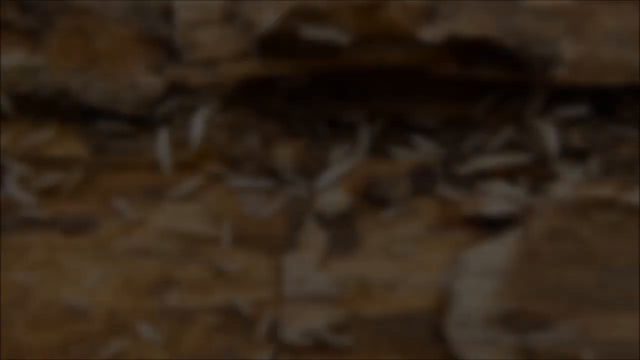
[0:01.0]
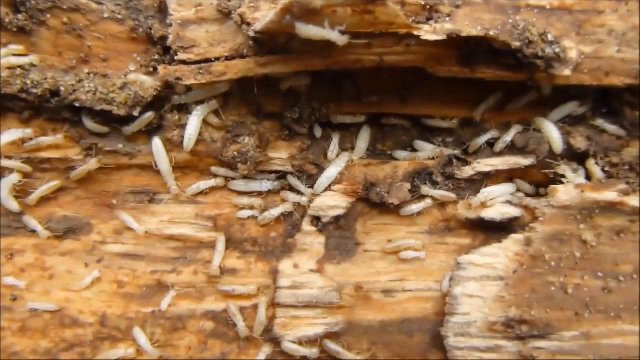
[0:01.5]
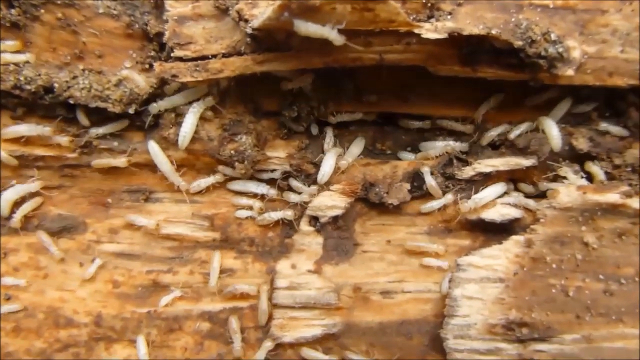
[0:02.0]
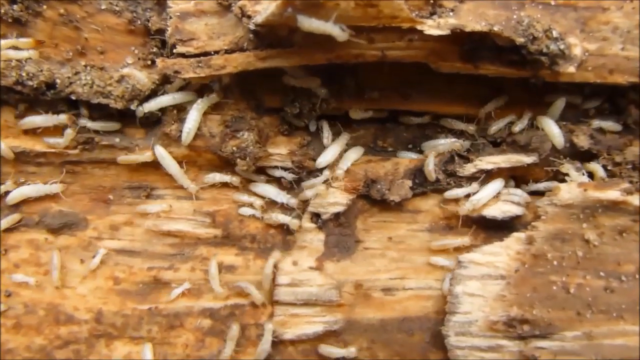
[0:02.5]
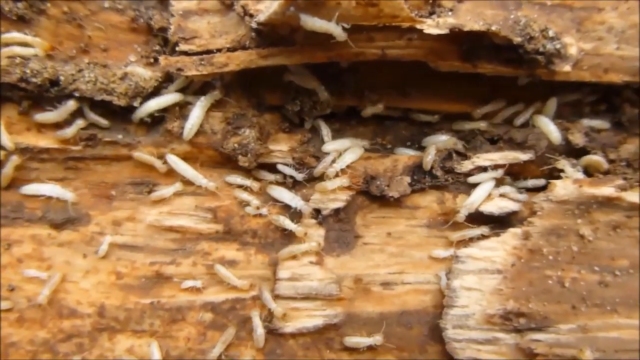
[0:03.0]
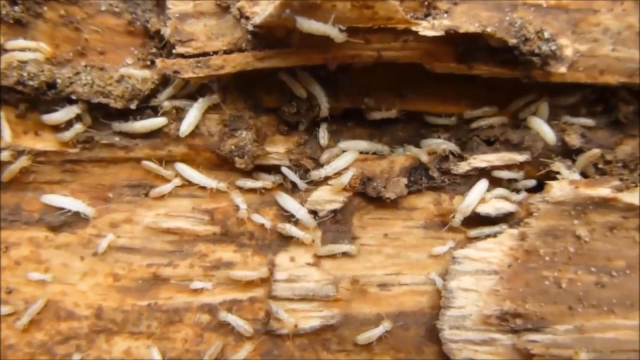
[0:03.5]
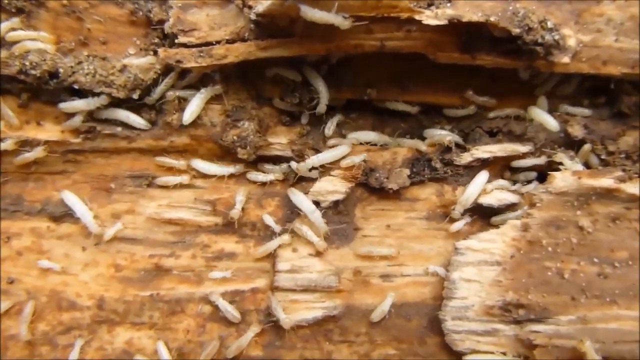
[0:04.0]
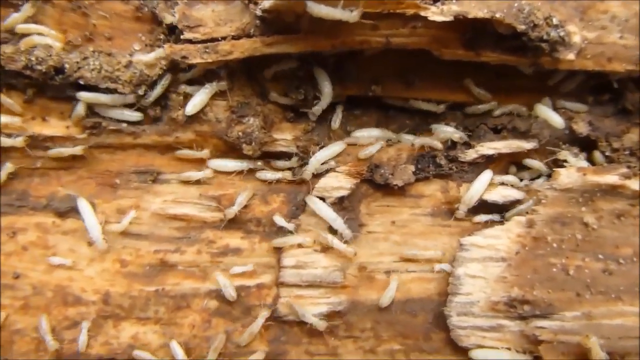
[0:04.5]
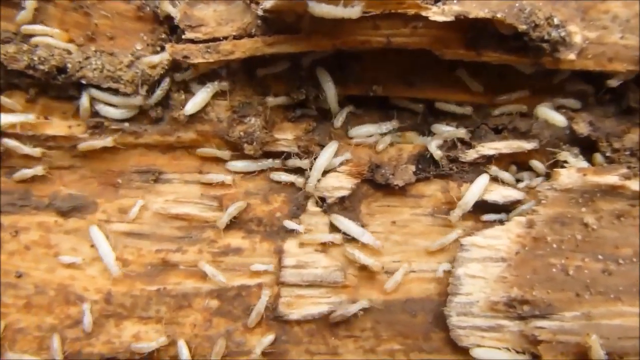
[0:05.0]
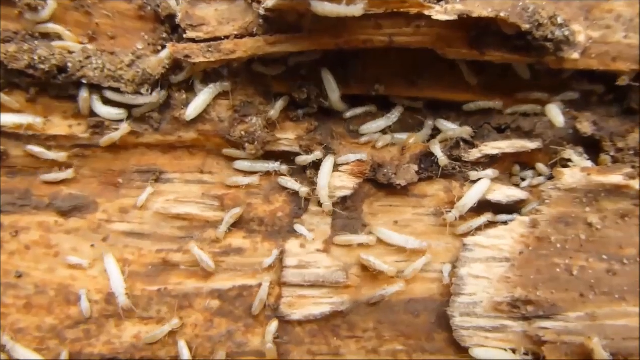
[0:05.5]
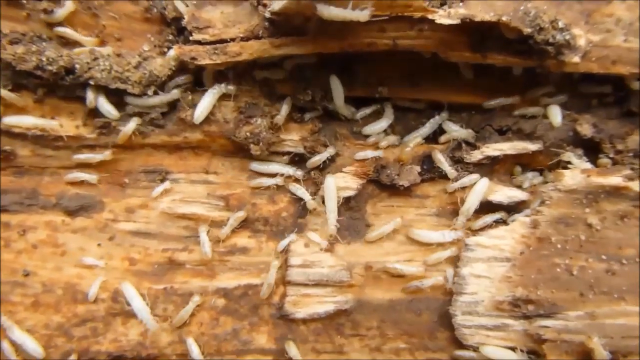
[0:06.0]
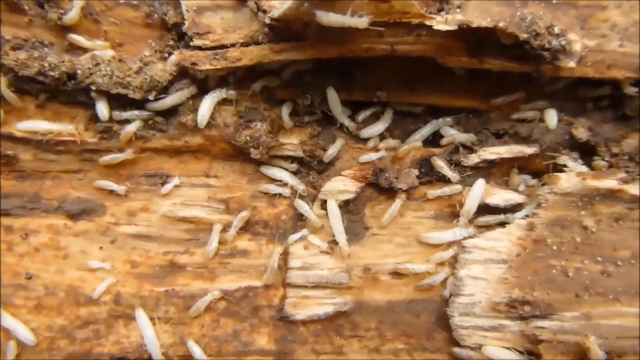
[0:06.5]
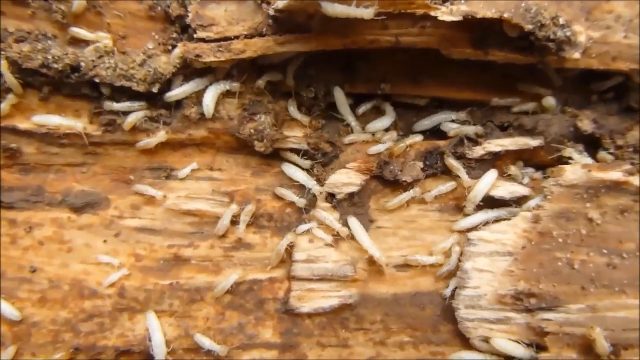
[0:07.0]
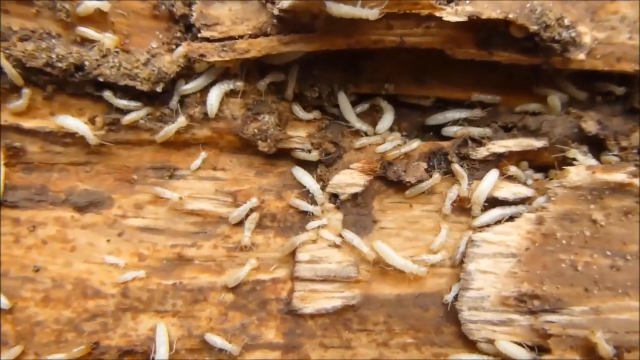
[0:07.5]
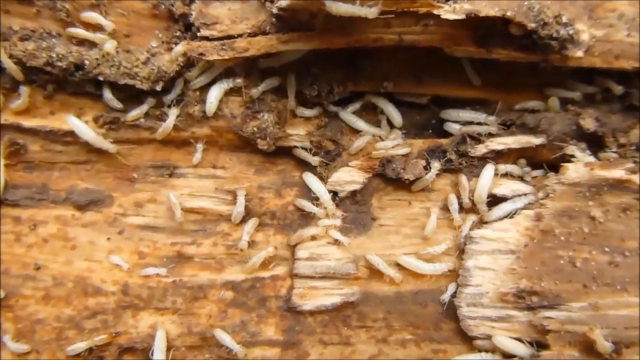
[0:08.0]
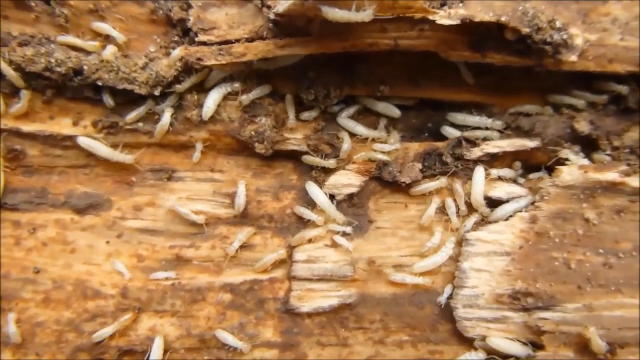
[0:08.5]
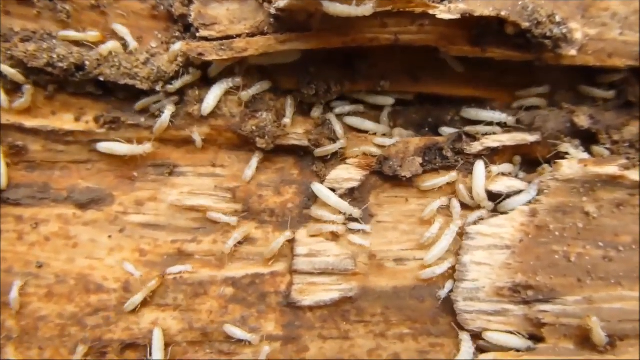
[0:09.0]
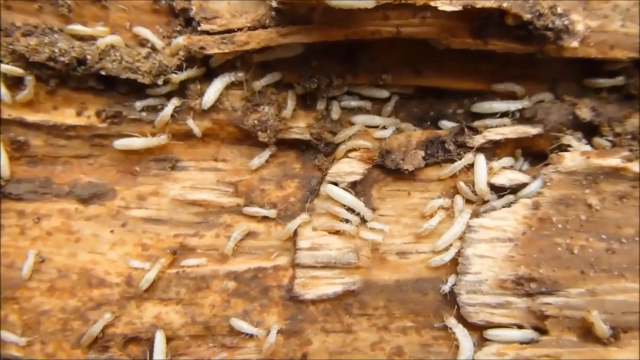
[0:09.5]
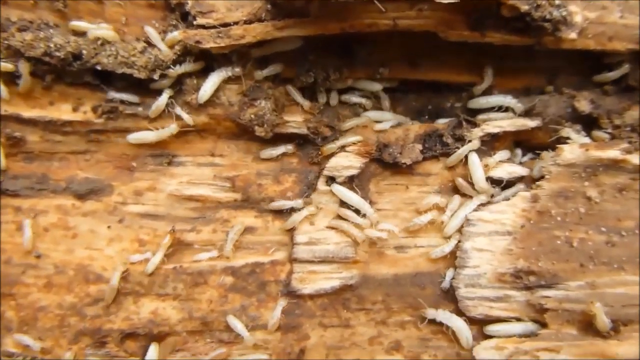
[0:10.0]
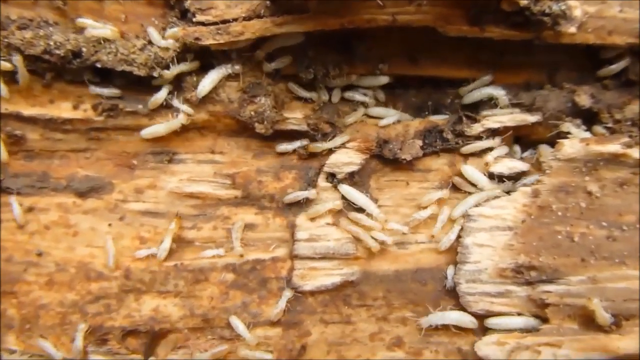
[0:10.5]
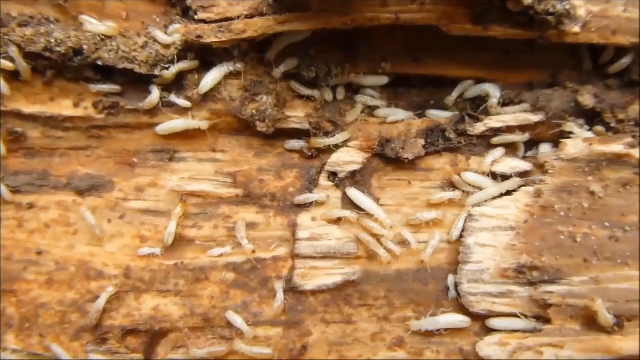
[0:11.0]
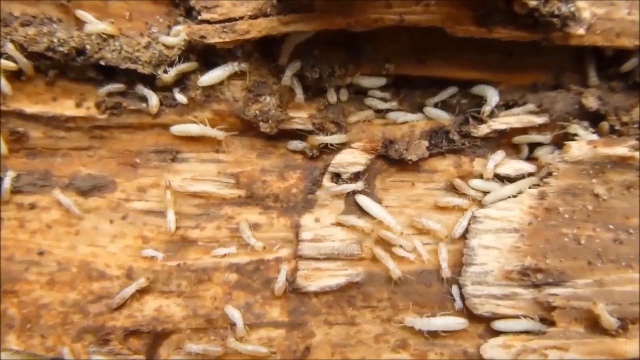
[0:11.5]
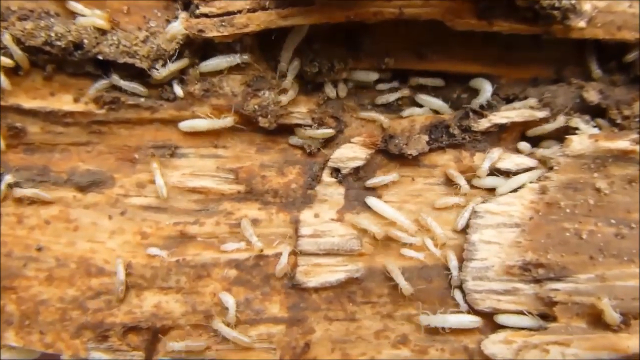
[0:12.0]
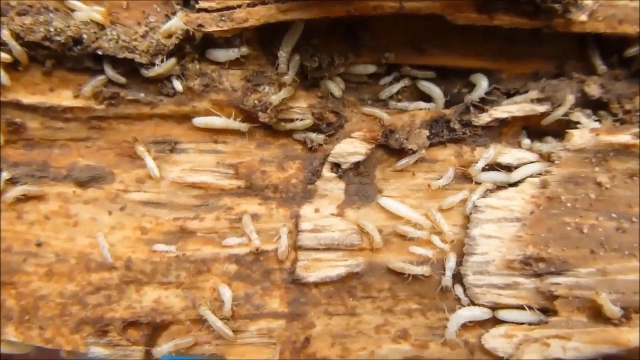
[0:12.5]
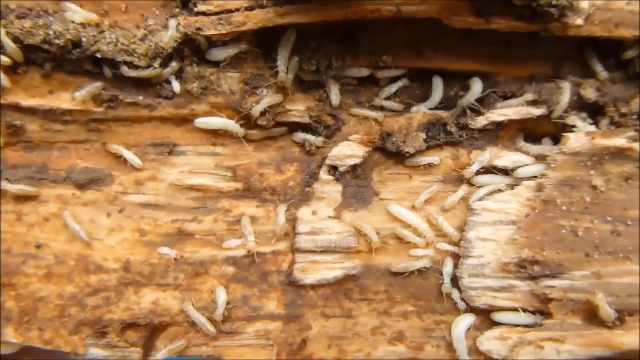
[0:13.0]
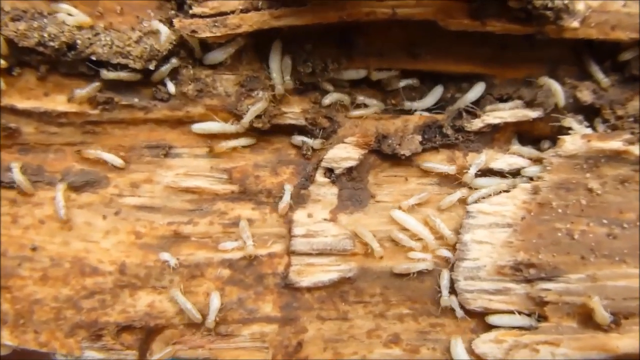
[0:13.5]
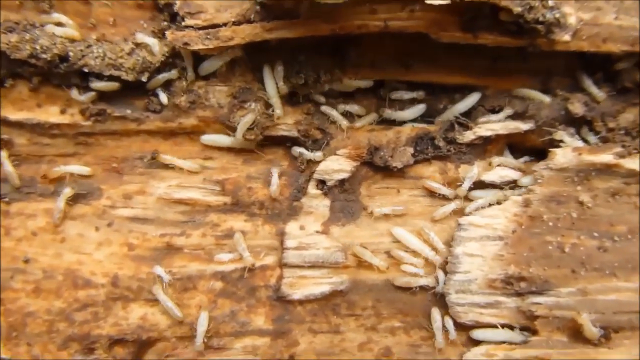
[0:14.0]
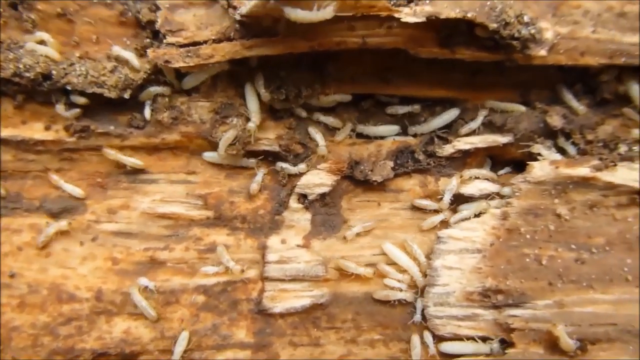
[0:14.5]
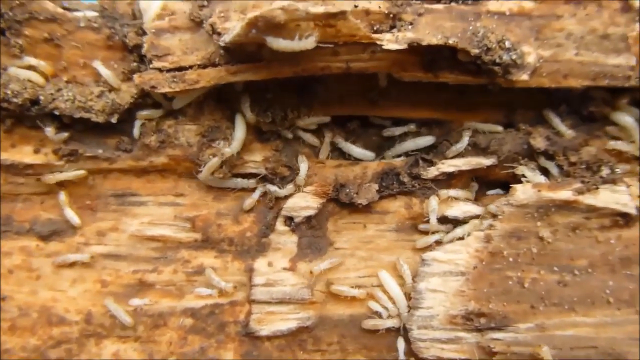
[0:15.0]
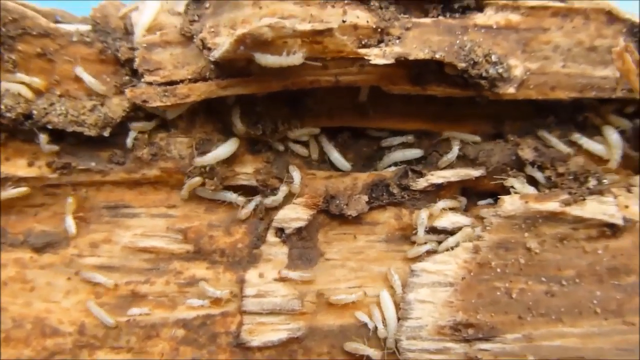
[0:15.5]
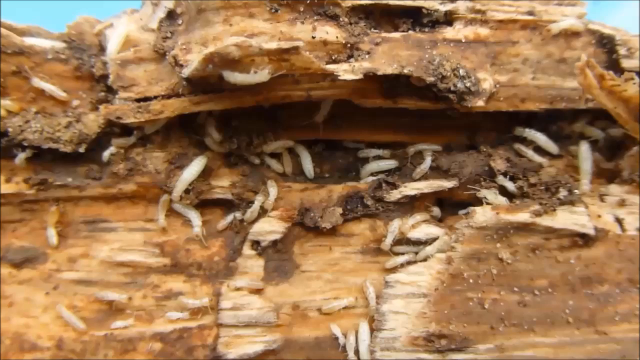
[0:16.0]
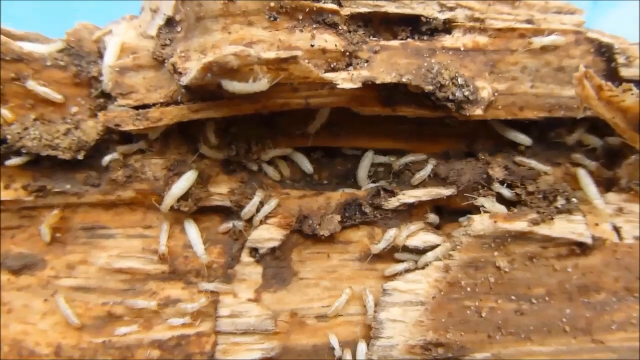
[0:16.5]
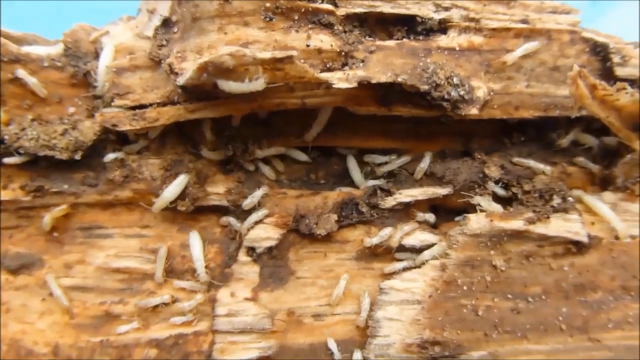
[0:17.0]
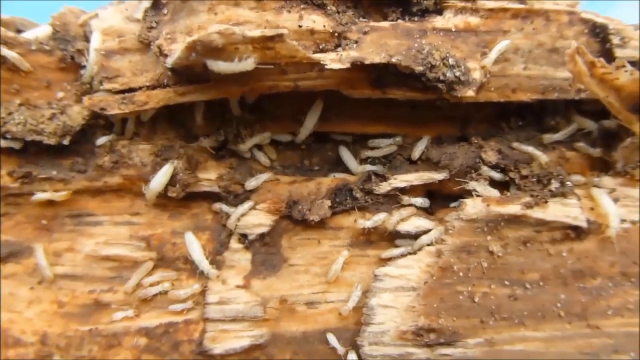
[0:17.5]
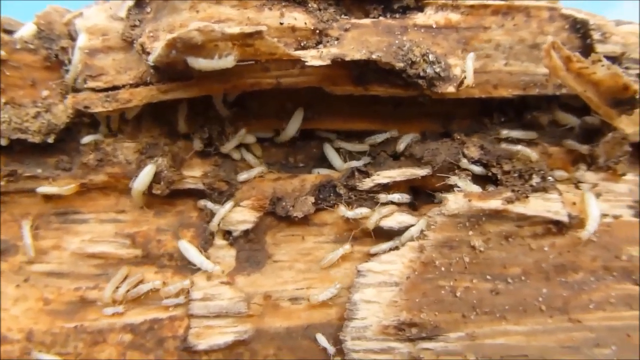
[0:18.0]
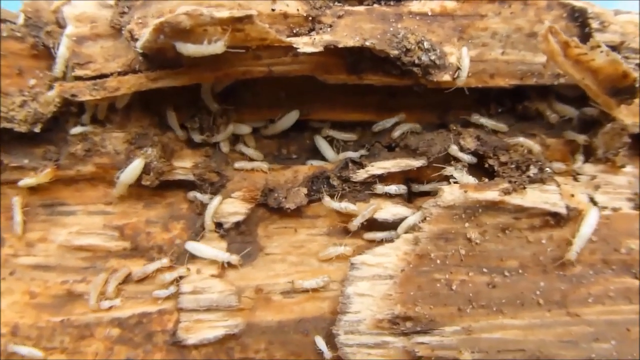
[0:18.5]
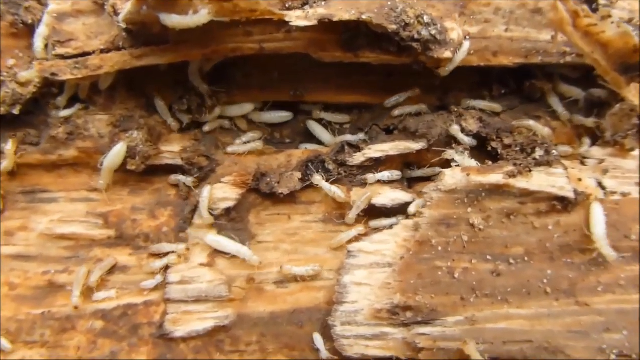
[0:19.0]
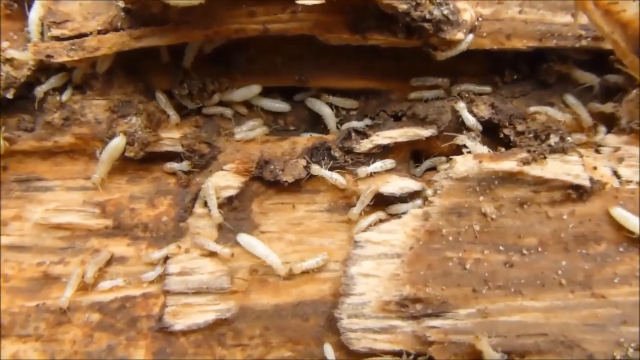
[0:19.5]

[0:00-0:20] Large white maggots crawl over a light-colored piece of wood outdoors, with a lot of dirt around. They move in all different directions, and many hide in and enter the little crevices. A sliver of blue sky is visible at the top of the screen. The camera is zoomed in closely enough to show the legs and tentacles of the maggots as they walk around. The kind of tree is unclear, and it is hard to tell whether the log was split open or chopped and left in the woods. There is some dirt over it, possibly from decomposition and the maggots' activity. The wood shows some light-colored shades. The camera is a little shaky, but the details of the maggots navigating their way are still visible.